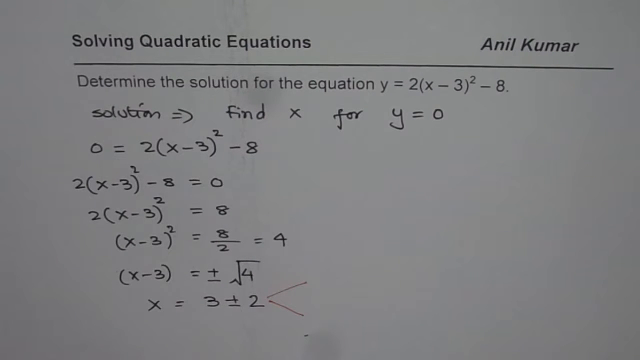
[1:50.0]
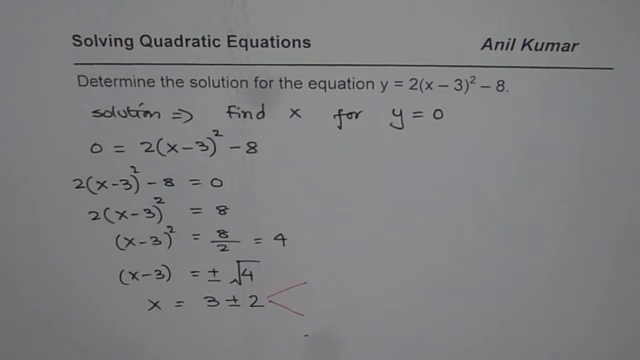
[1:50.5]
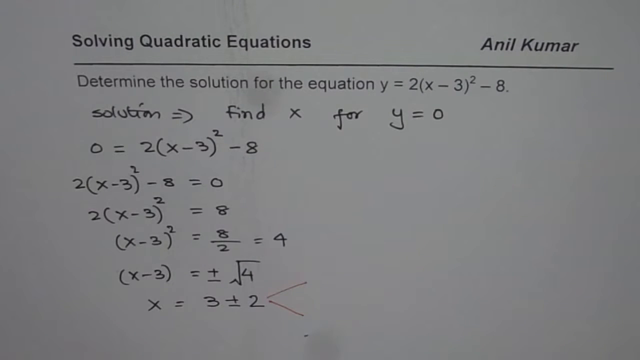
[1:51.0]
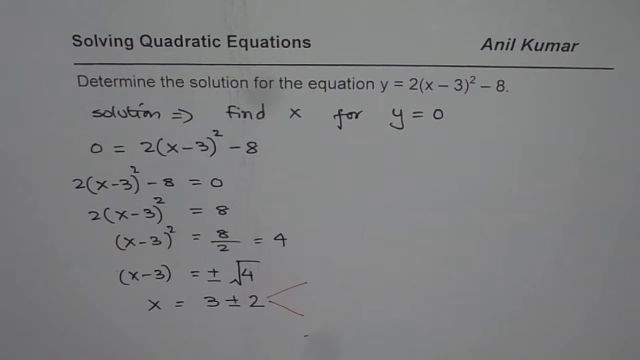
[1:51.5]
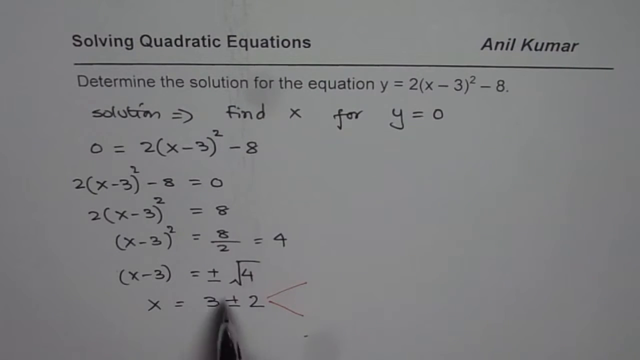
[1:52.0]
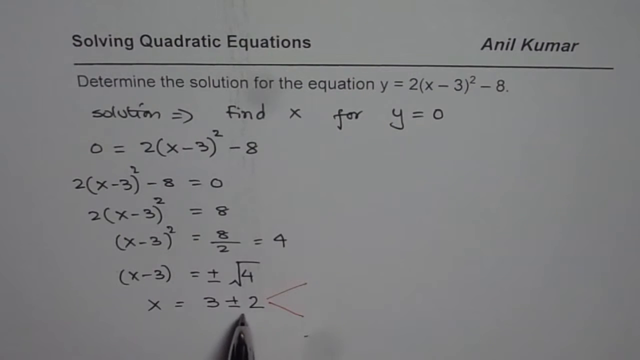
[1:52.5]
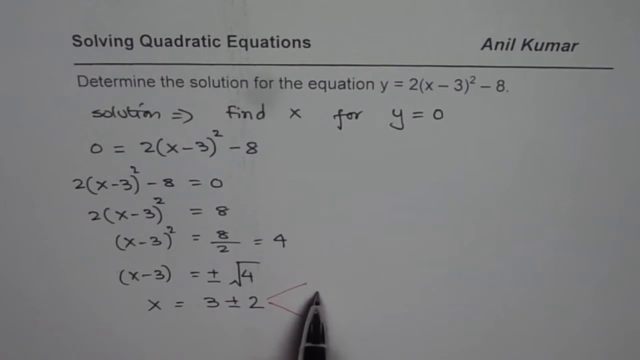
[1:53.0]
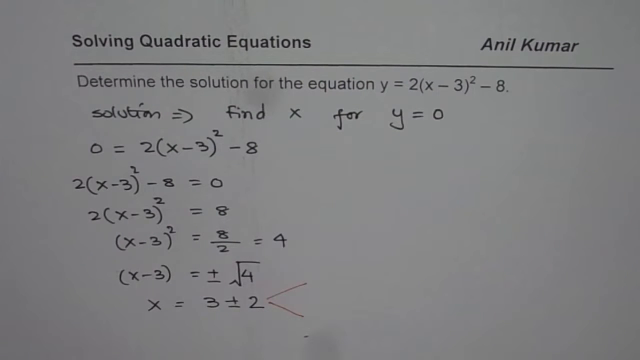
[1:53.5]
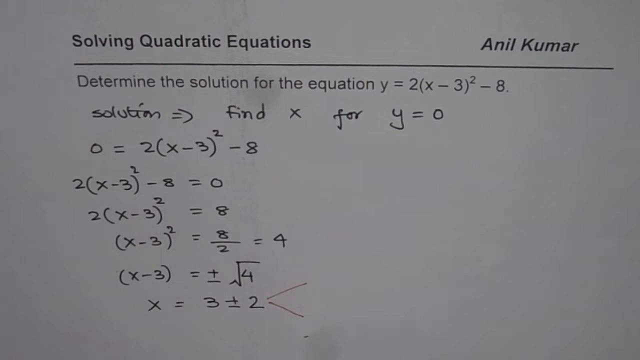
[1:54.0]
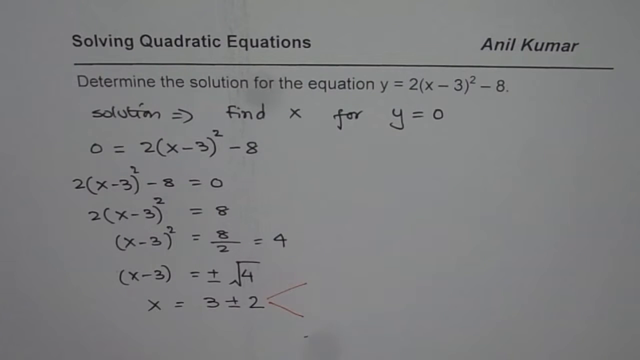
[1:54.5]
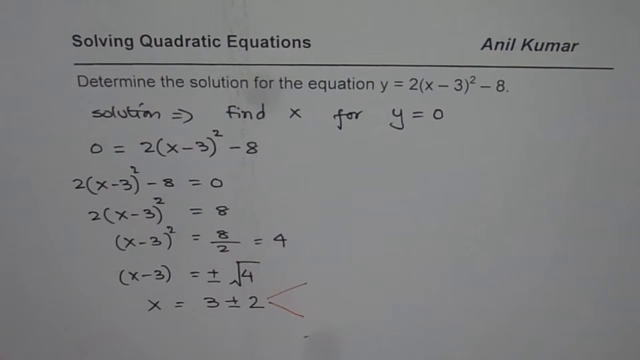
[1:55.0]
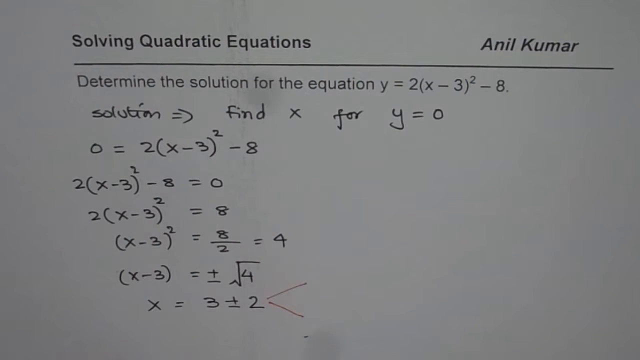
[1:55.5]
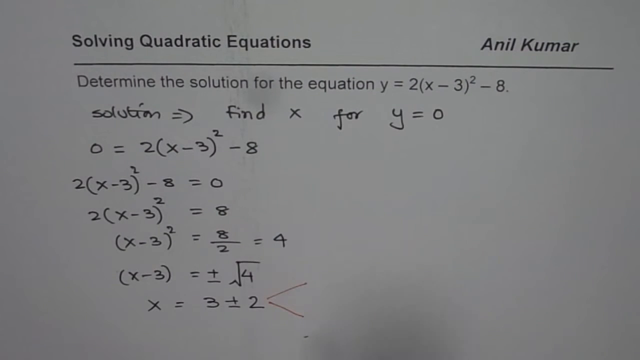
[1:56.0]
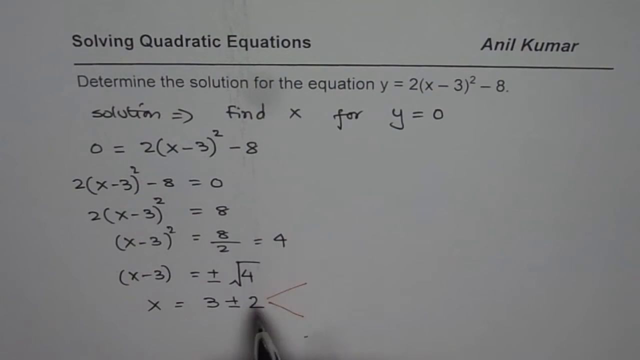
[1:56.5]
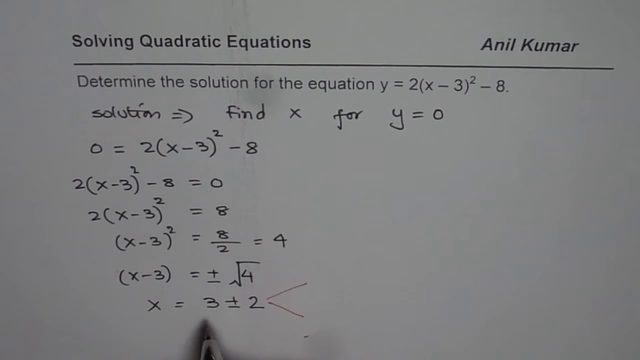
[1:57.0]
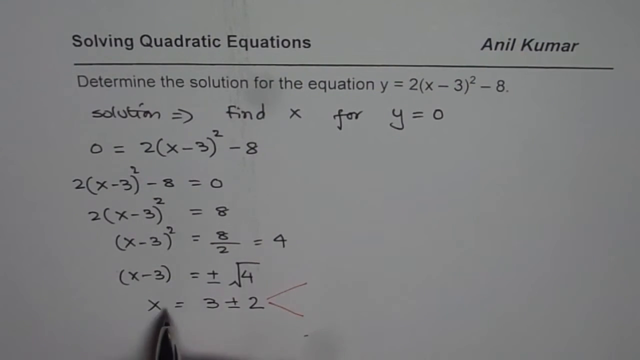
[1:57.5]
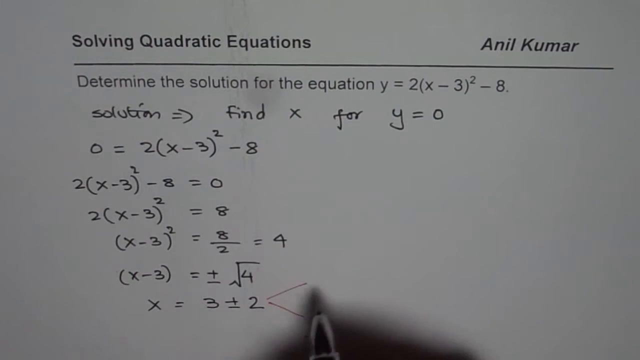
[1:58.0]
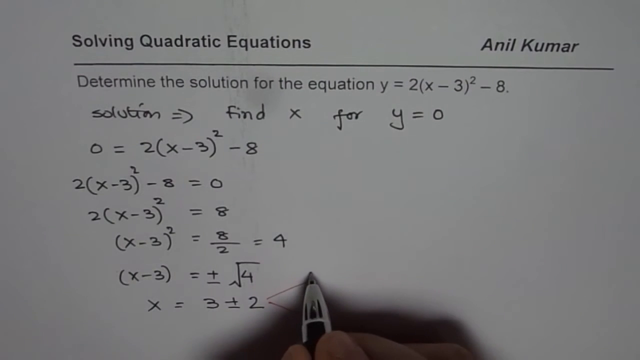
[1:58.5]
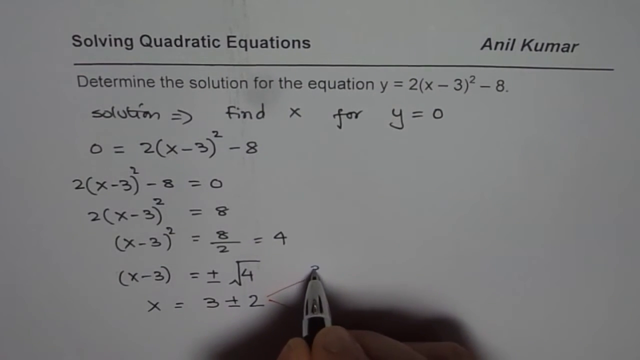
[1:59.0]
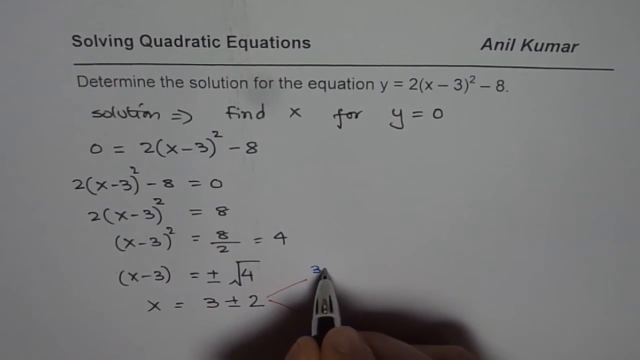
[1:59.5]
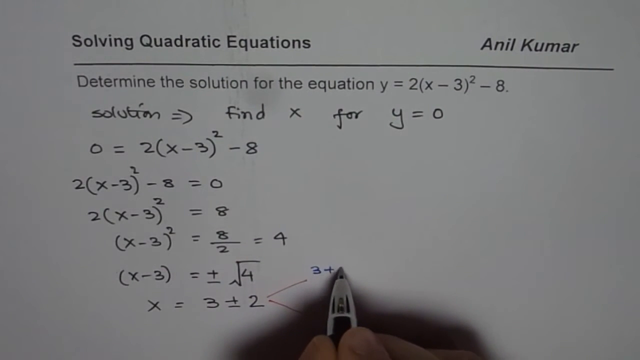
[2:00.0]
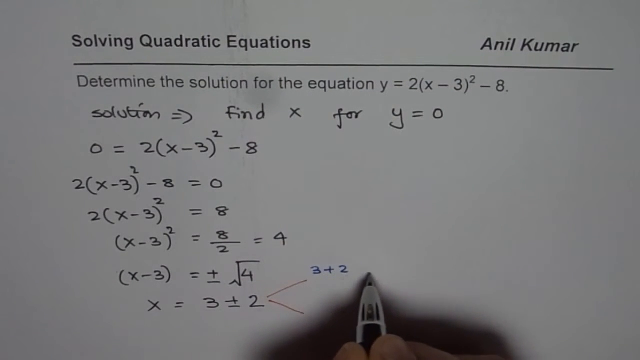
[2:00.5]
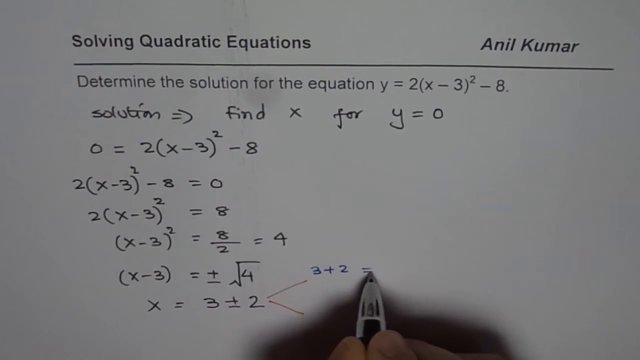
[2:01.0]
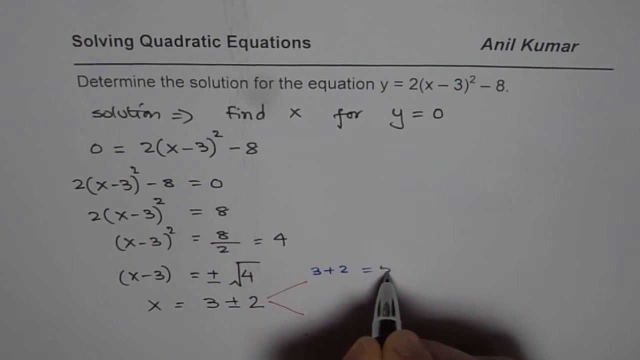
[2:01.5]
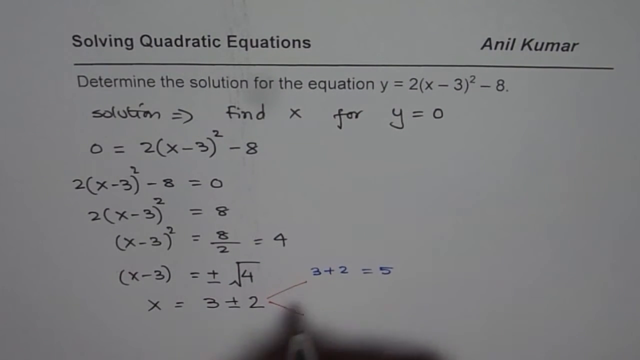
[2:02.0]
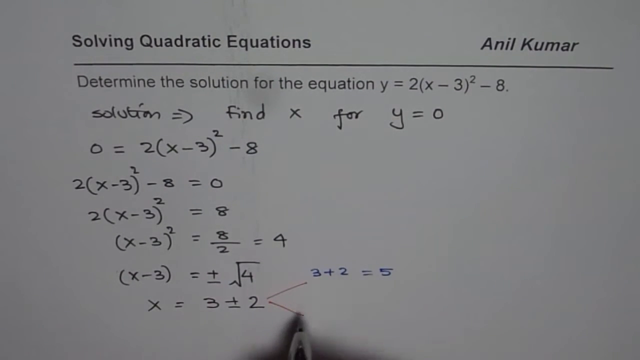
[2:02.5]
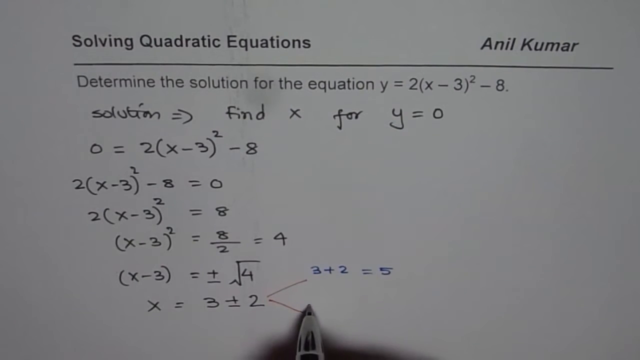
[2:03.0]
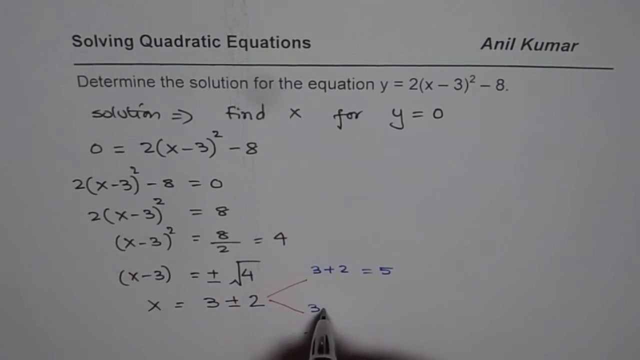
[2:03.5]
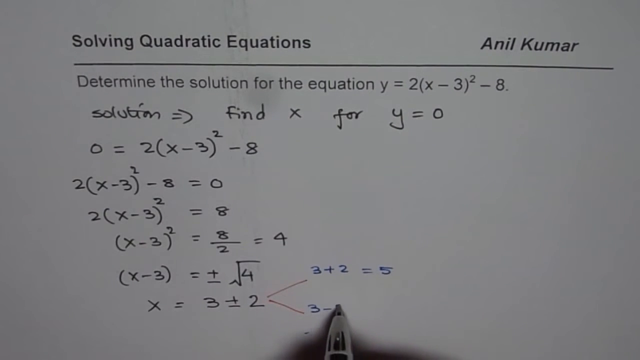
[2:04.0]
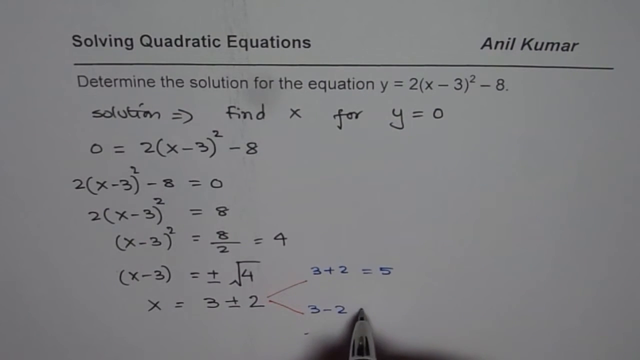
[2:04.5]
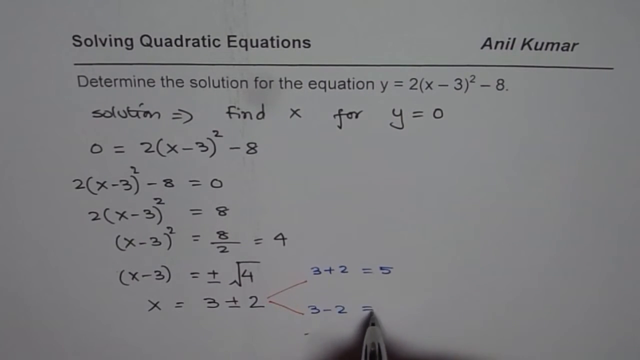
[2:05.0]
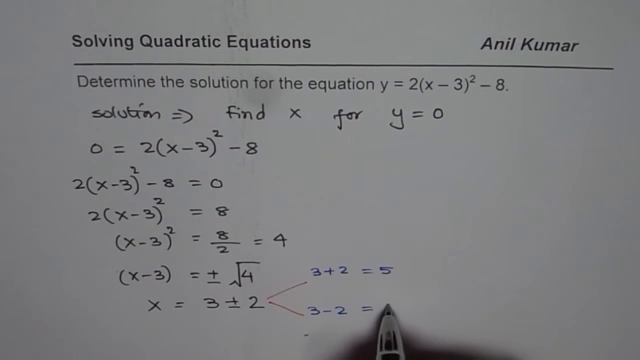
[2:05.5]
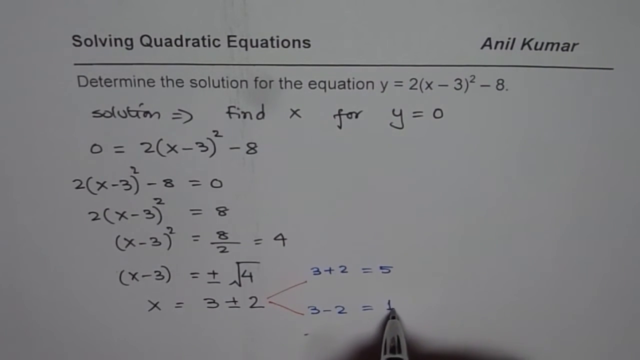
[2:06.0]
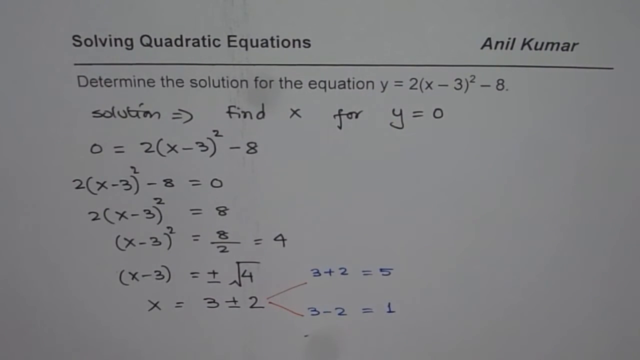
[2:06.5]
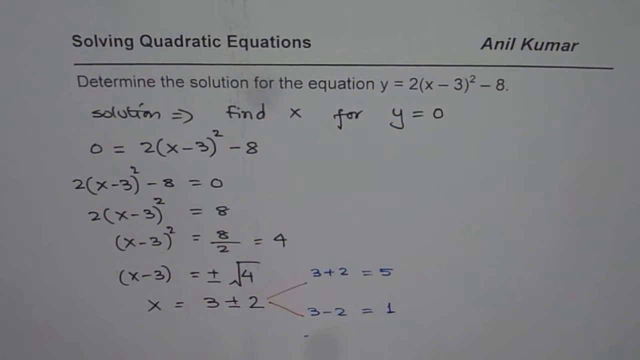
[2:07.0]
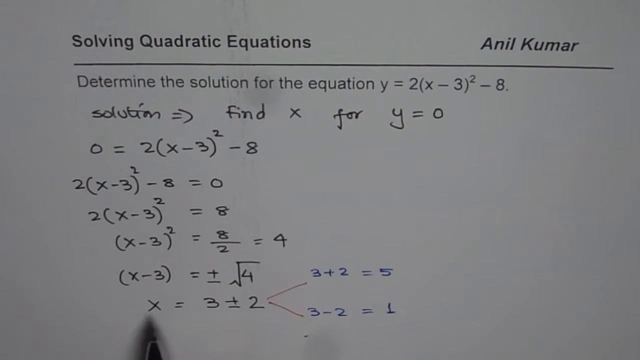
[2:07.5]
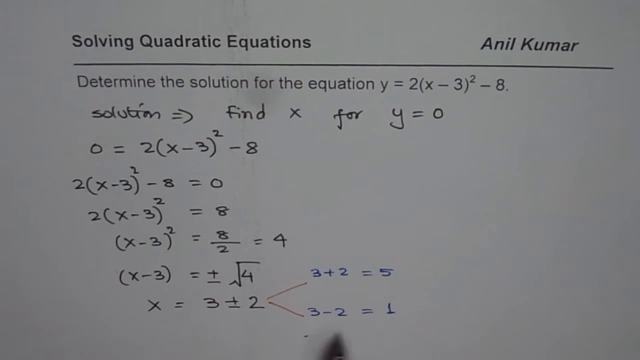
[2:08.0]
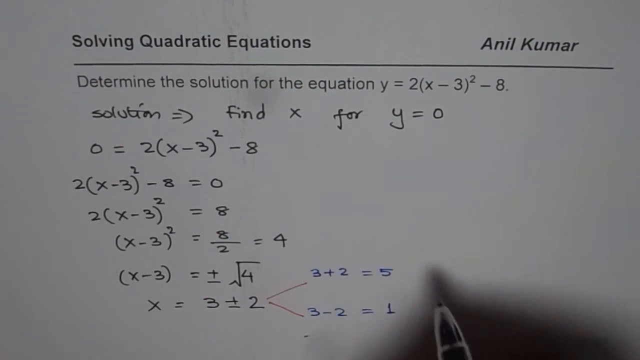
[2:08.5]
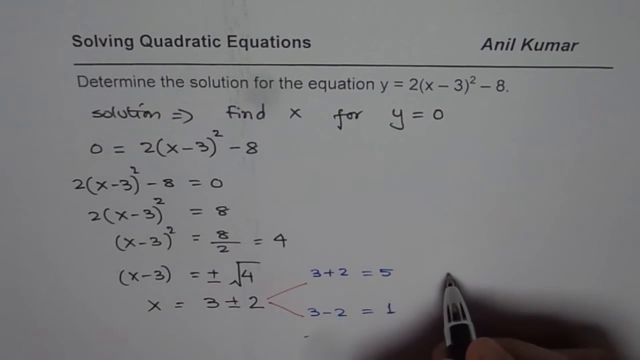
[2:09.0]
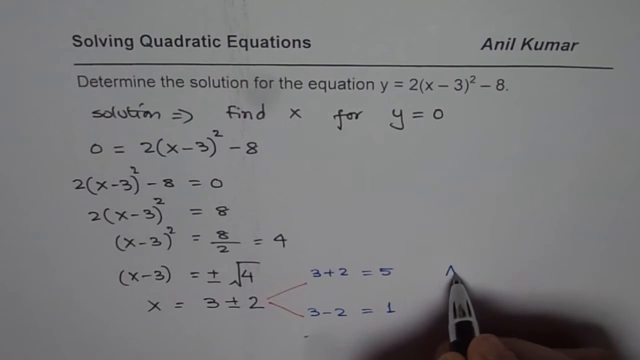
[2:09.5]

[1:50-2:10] The hand, holding a black pen and wearing a silver ring, continues solving on the paper headed "solving quadratic equations" with the equation "y = 2(x − 3)² − 8" and "solution = find x for y = 0". He writes numbers and brackets. Some of the writing is black and some is red, and a blue pen is now writing.